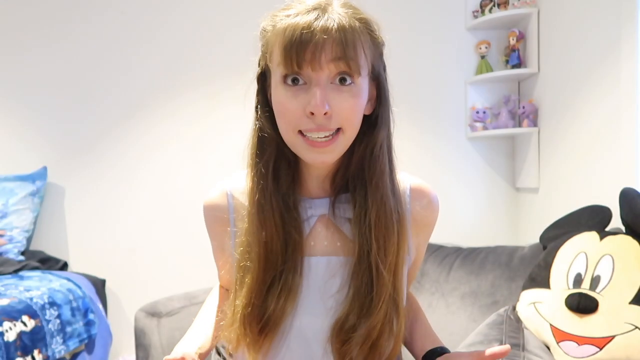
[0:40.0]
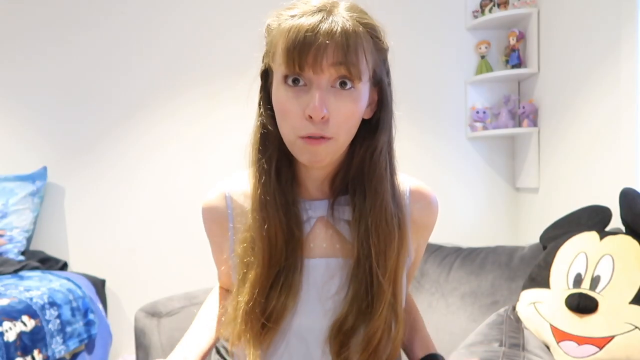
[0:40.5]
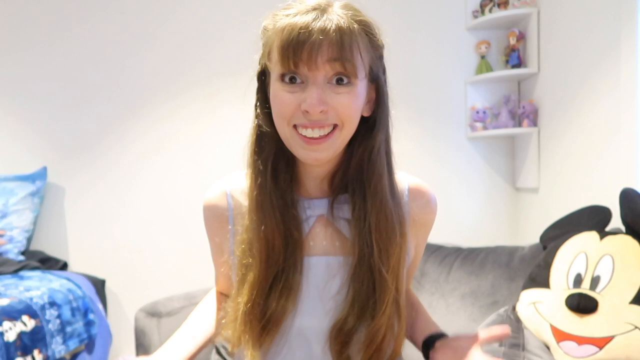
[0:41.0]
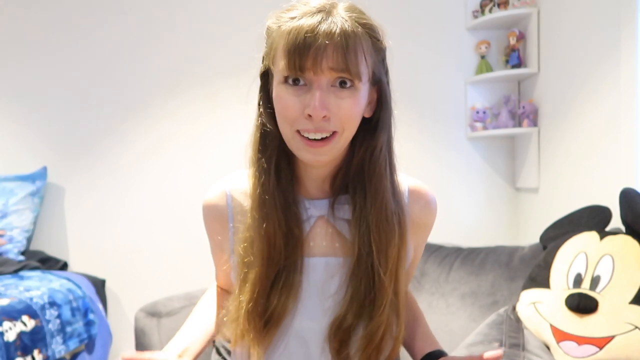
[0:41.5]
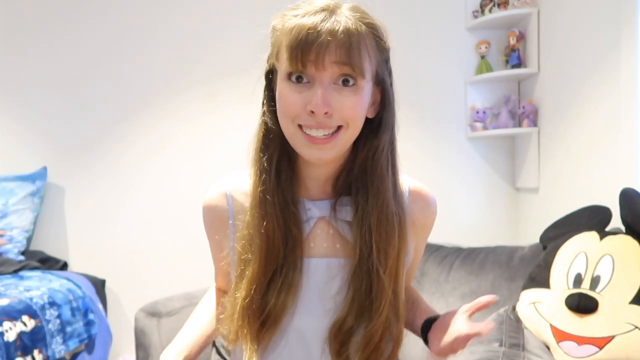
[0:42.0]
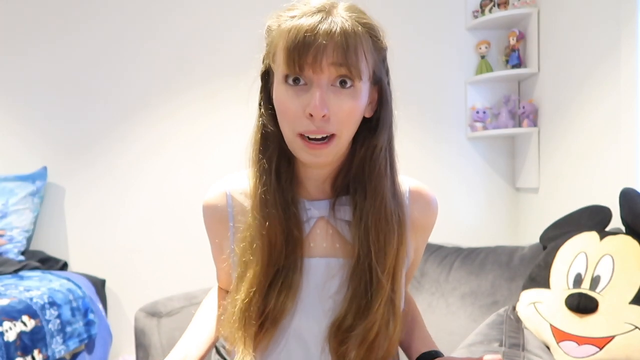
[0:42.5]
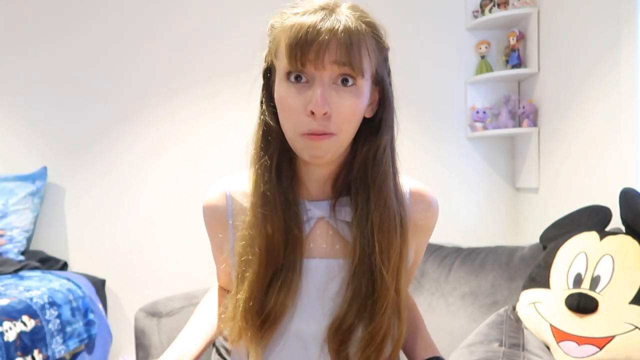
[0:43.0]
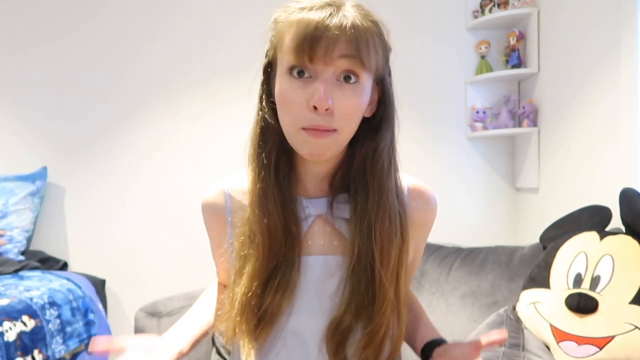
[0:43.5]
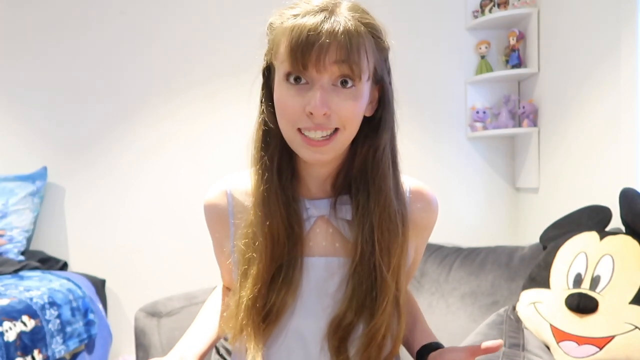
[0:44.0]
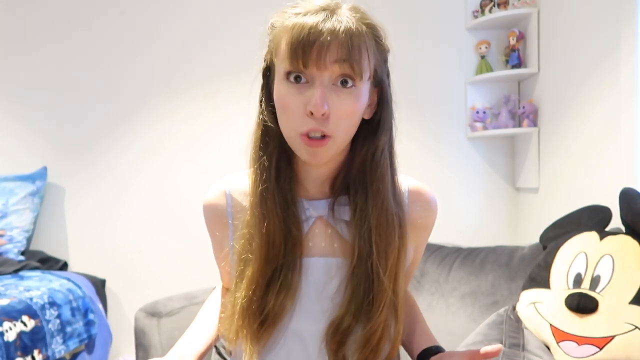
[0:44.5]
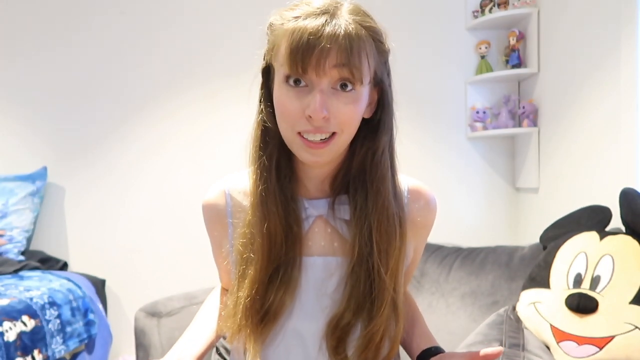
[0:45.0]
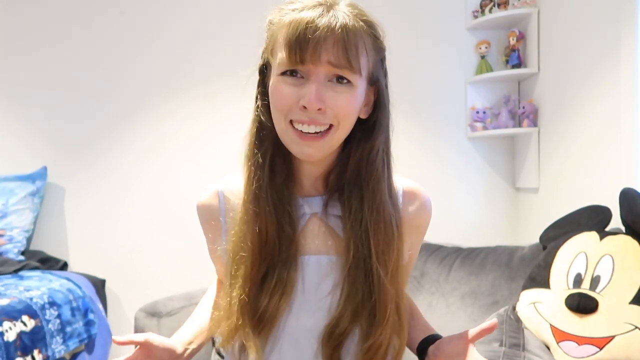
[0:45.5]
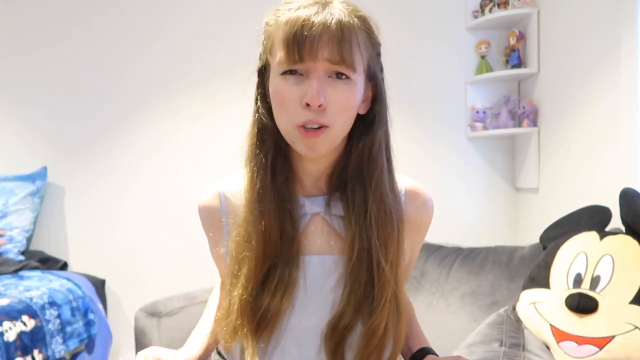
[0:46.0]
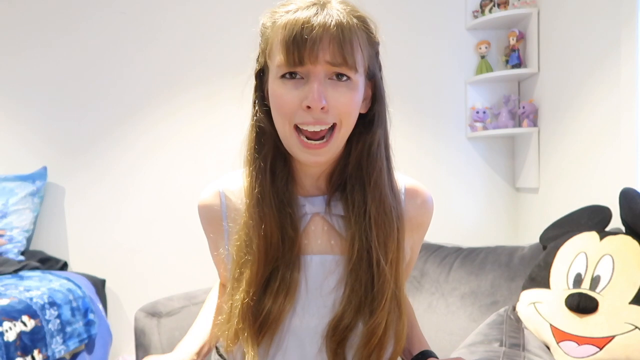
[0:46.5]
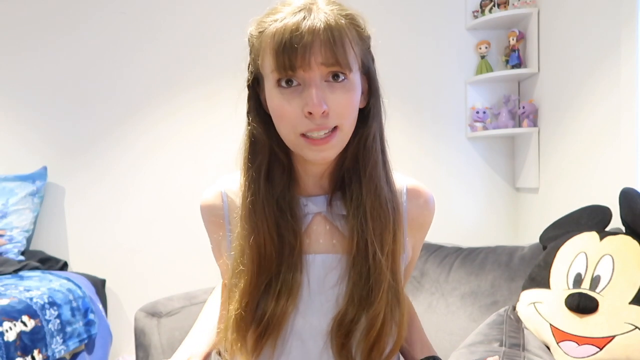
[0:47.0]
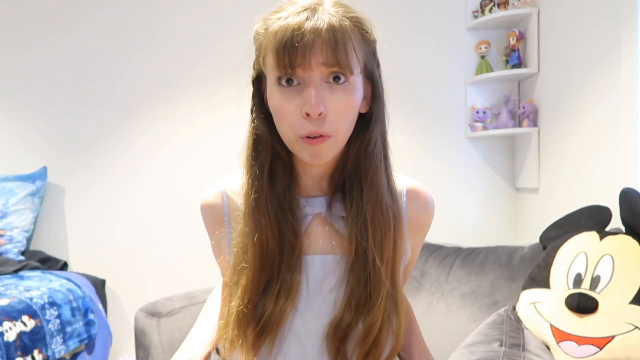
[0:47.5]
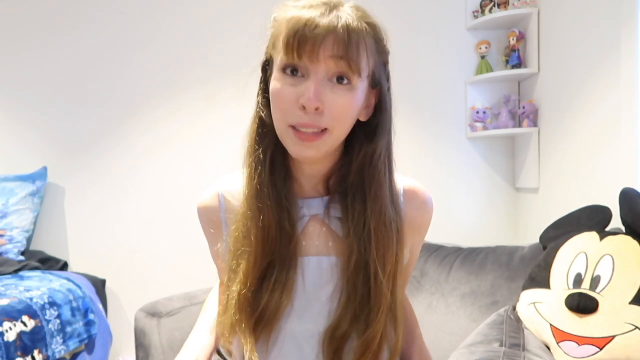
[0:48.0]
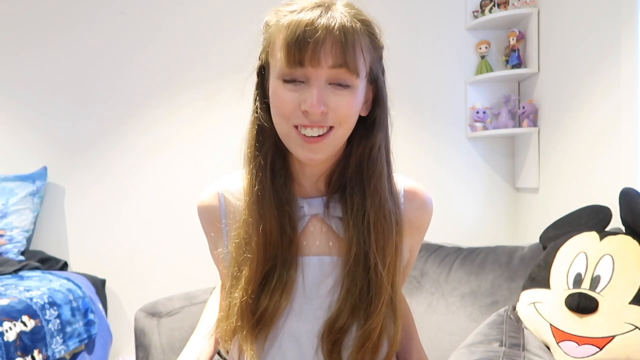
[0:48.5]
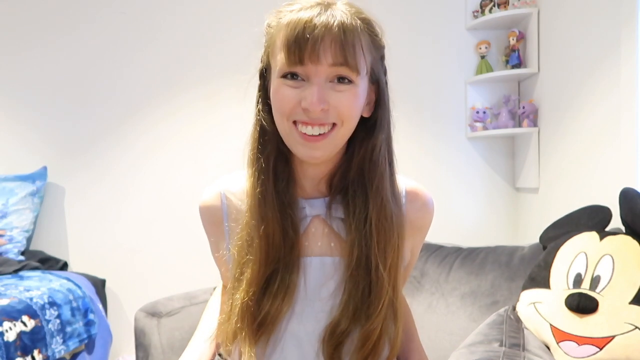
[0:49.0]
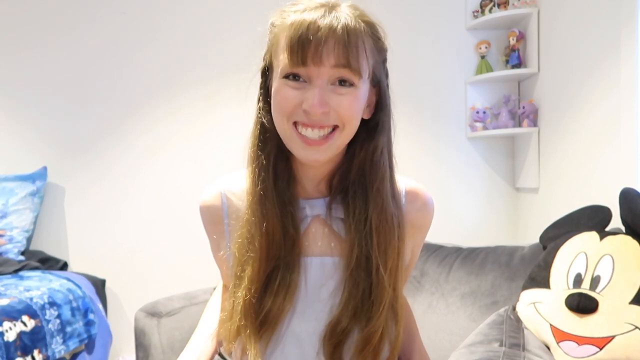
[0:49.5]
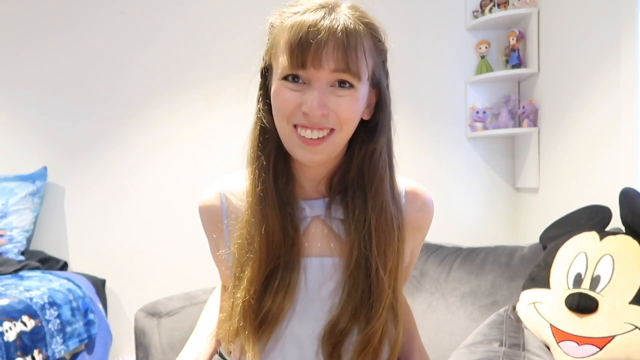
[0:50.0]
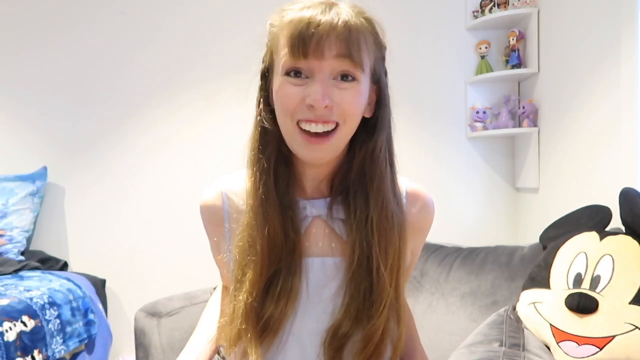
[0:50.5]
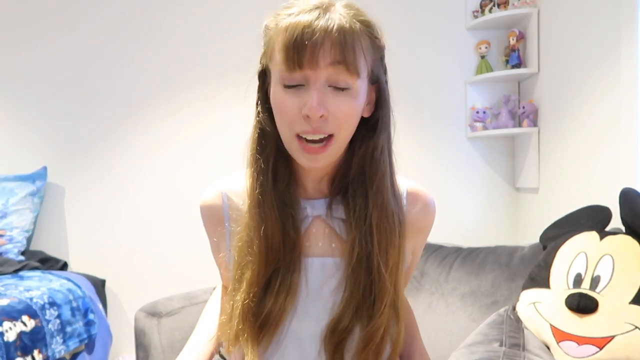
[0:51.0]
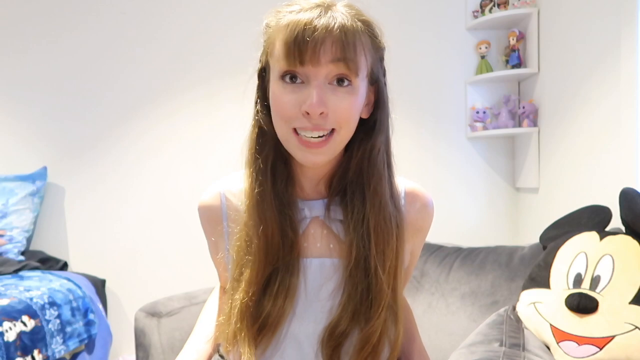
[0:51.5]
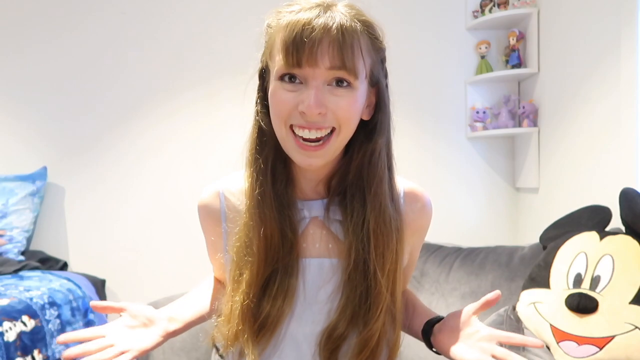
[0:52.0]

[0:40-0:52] A woman sits in the center of the screen with a very excited look on her face, her eyes wide open and her mouth in almost a smile shape. Her hair hangs out in front of her as she leans into the camera, so her face is seen up very close. Her arms are pulled back far behind her, so she appears to have no arms. She wears a sleeveless purple dress. In the background are a gray couch with a very large Mickey pillow and a corner shelf holding figurines. As she talks, she makes very sharp facial expressions, her head bobbing side to side and her hands going up and down as if to say, "Why, why me?" Her expression looks very displeased, and she seems to be begging for changes. She moves her head so fast that her hair shakes side to side on her short bangs across her forehead. Finally she smiles and throws her hands up, as if to say, "What can you do?"